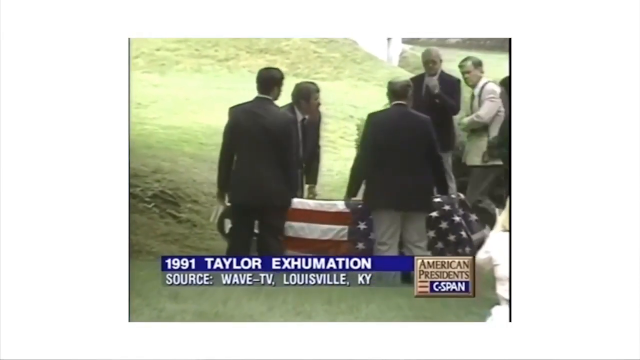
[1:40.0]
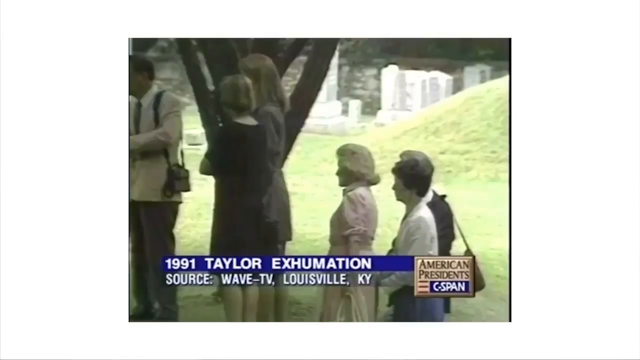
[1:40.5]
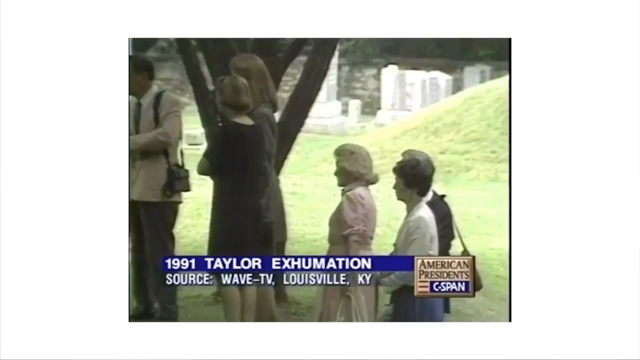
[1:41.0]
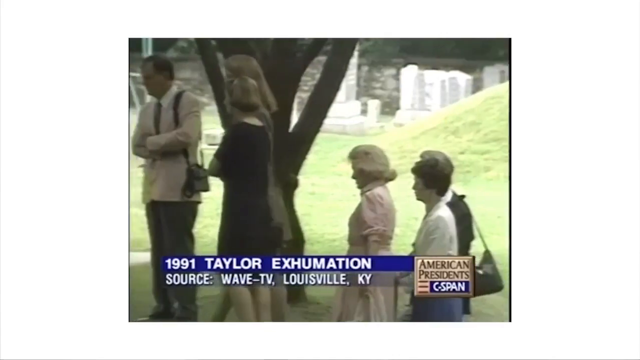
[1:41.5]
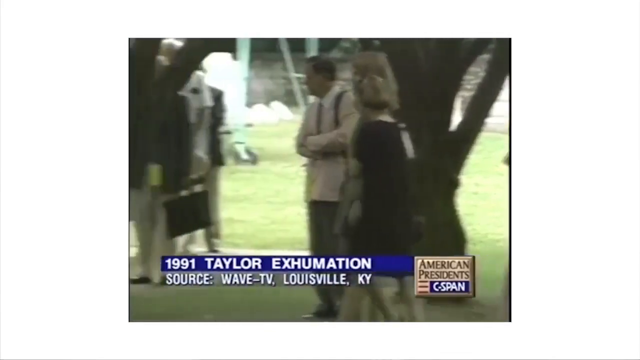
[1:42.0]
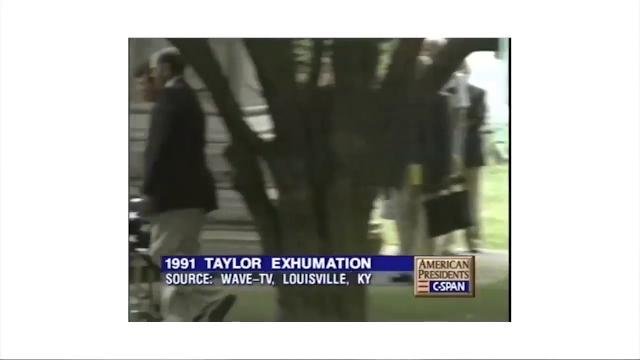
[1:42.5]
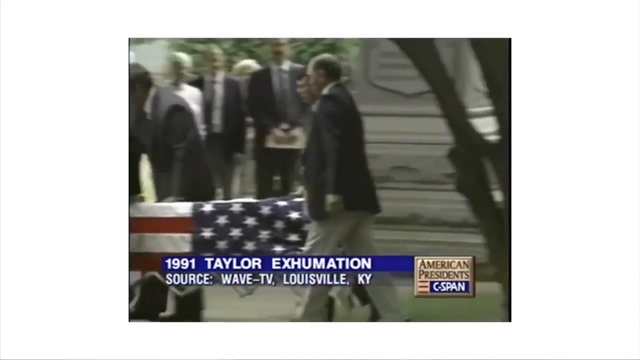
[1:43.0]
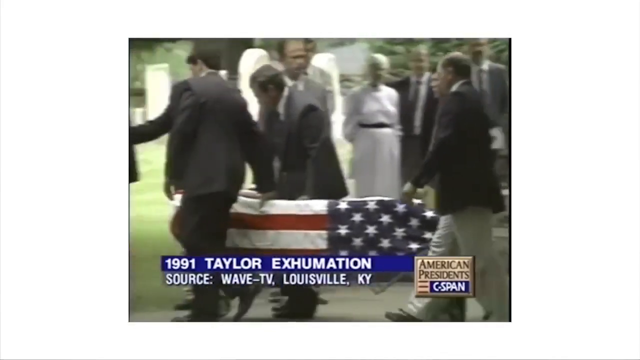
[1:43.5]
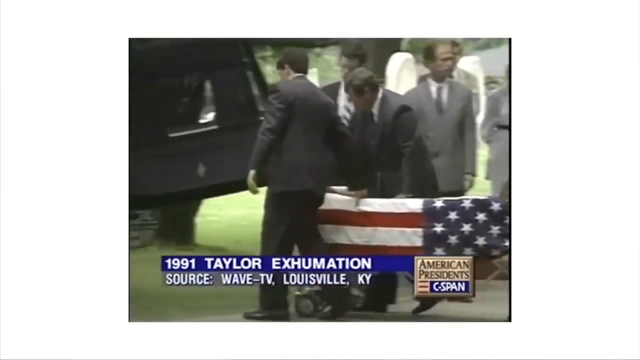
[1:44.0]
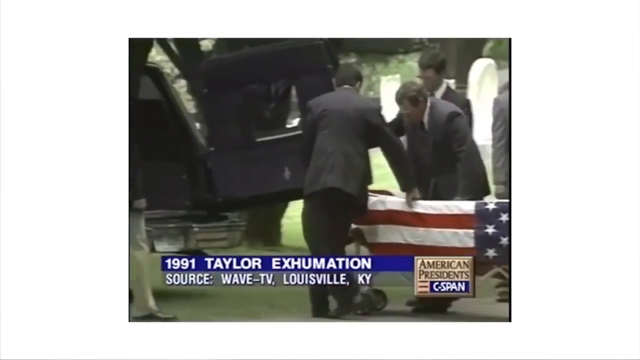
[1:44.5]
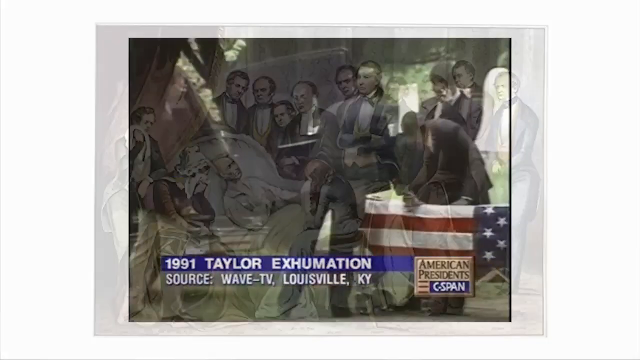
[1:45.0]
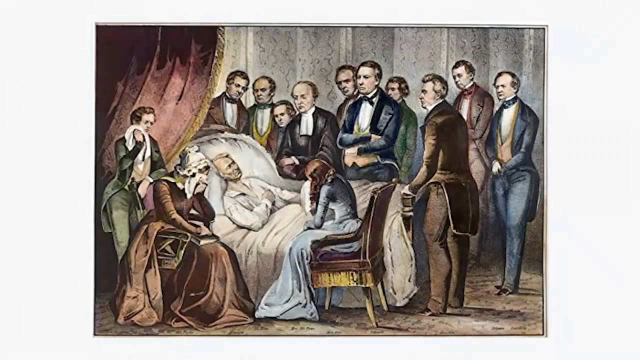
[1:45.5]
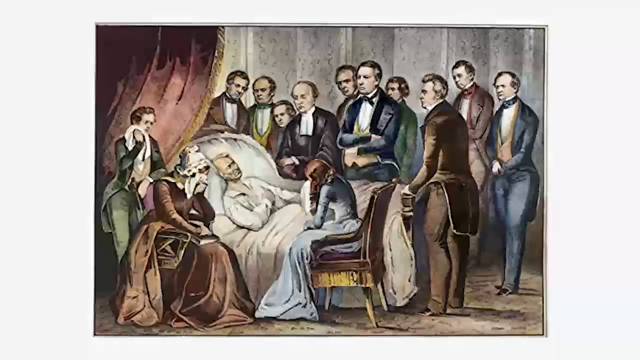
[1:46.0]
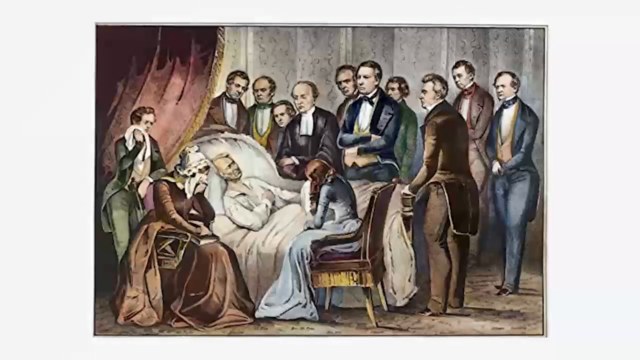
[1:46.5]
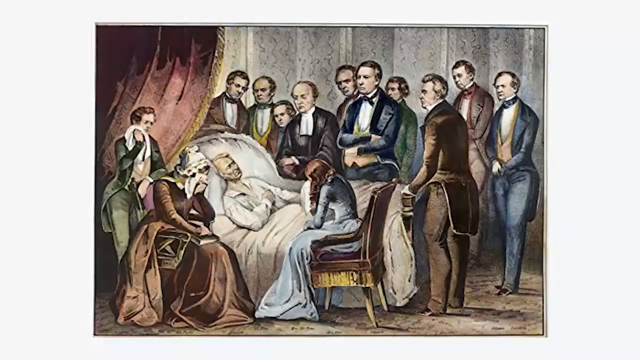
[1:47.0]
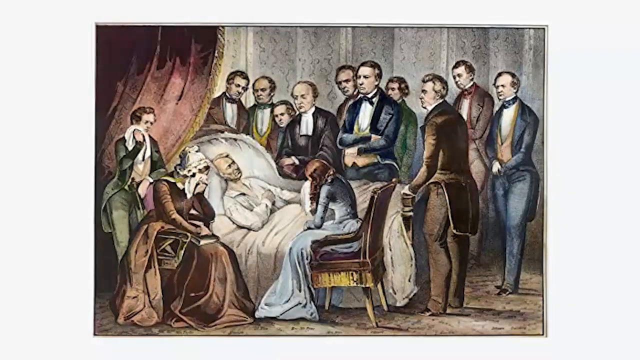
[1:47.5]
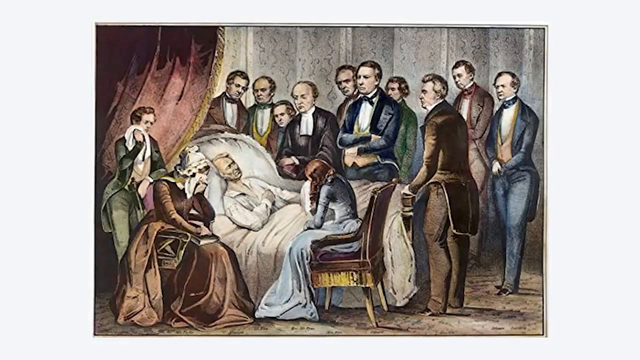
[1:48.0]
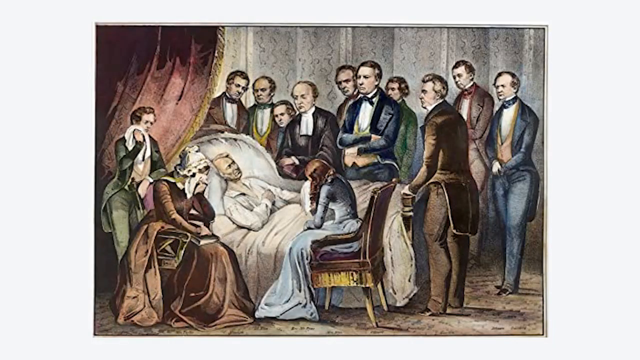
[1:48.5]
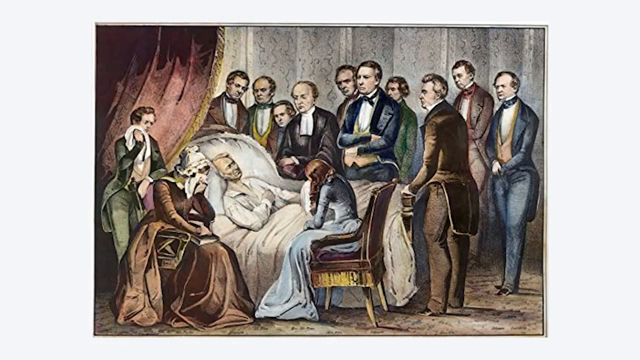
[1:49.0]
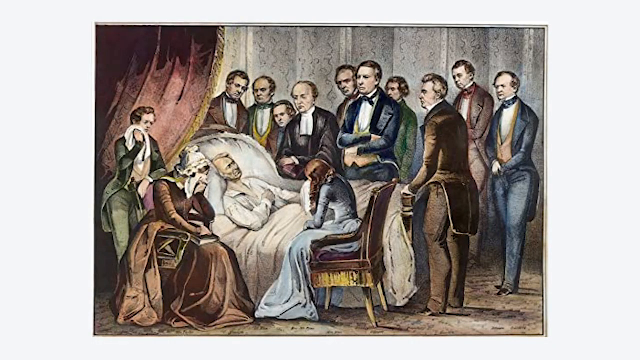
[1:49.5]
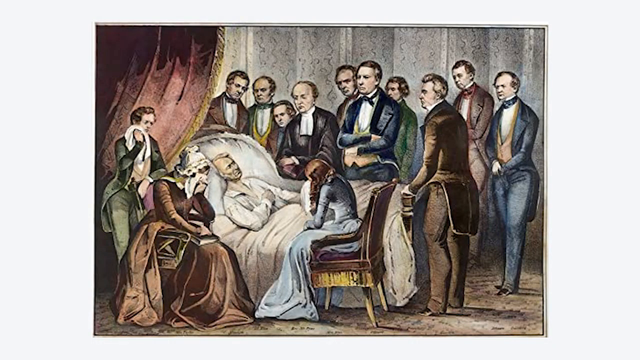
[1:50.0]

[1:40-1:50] A casket covered in an American flag is shown, with some people dressed in suits in front of it. The video cuts to some women who are also dressed up, apparently also in the cemetery, standing in front of a tree. The camera pans back to the left, showing three people holding the casket and walking toward what appears to be a vehicle, apparently to place the casket in it. The video then cuts to a picture of a man lying in bed with people surrounding him.